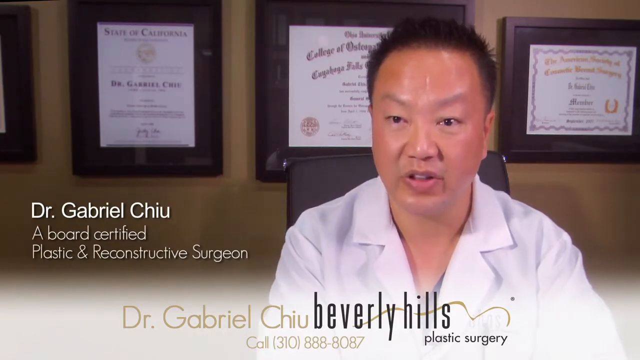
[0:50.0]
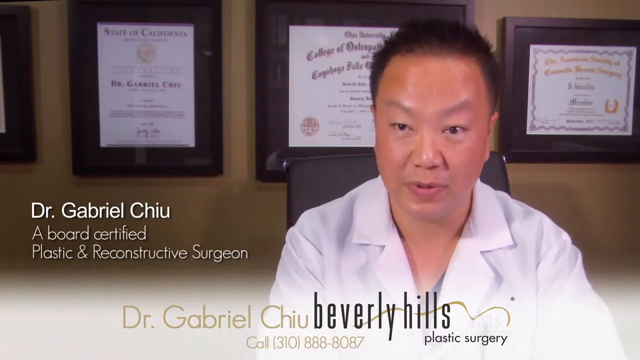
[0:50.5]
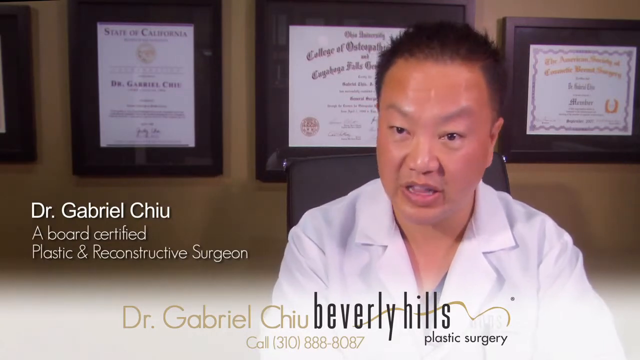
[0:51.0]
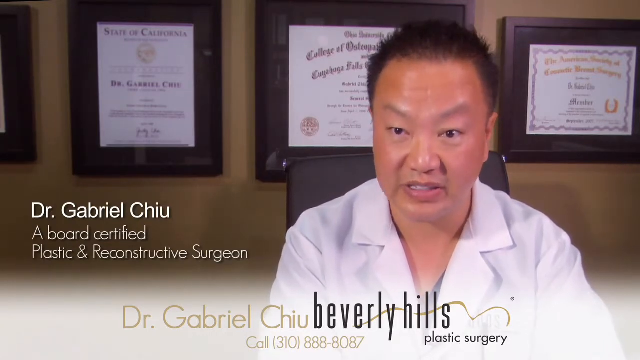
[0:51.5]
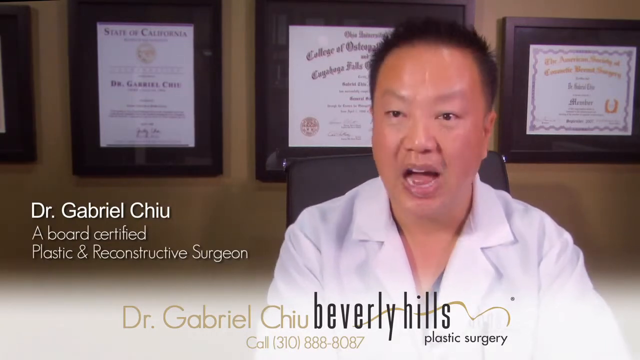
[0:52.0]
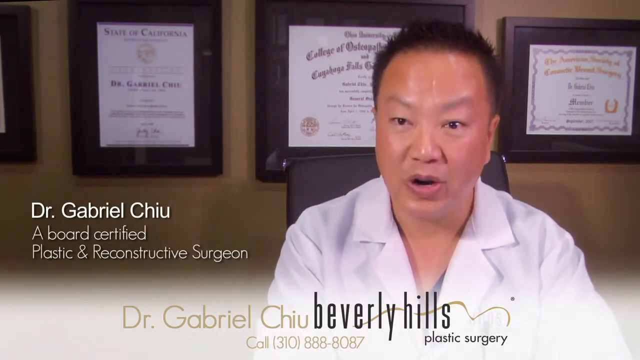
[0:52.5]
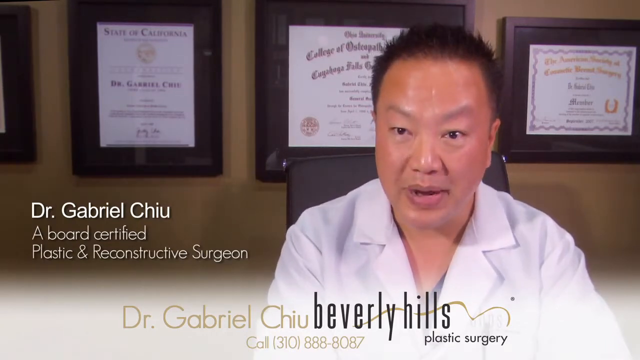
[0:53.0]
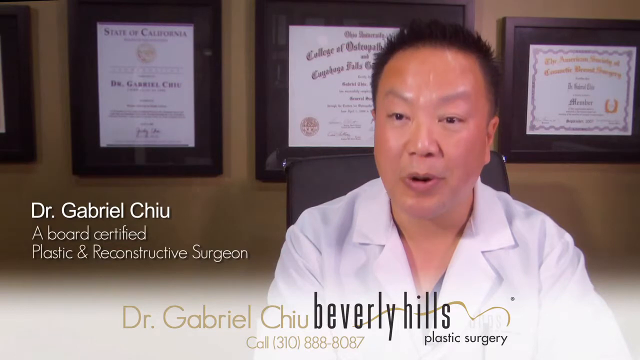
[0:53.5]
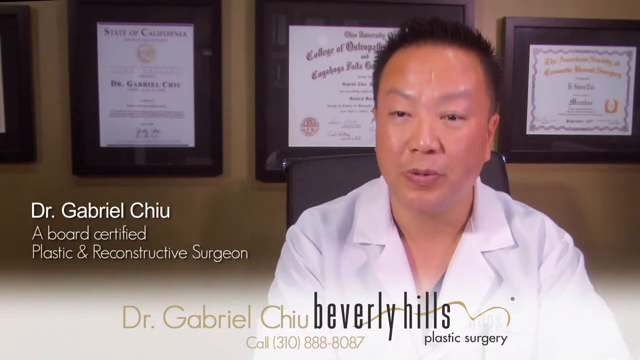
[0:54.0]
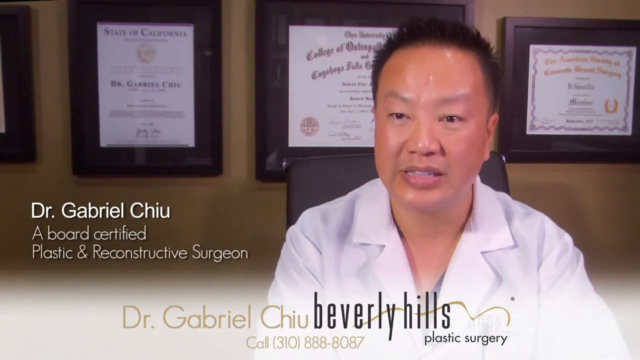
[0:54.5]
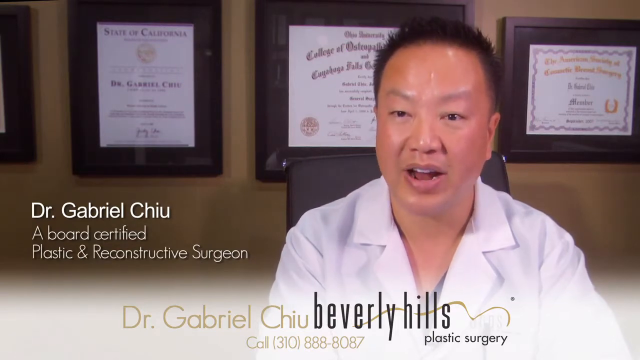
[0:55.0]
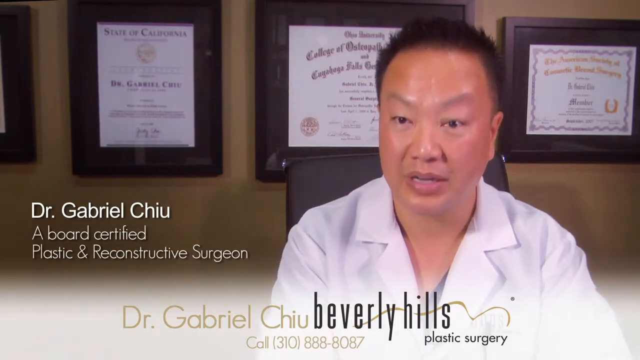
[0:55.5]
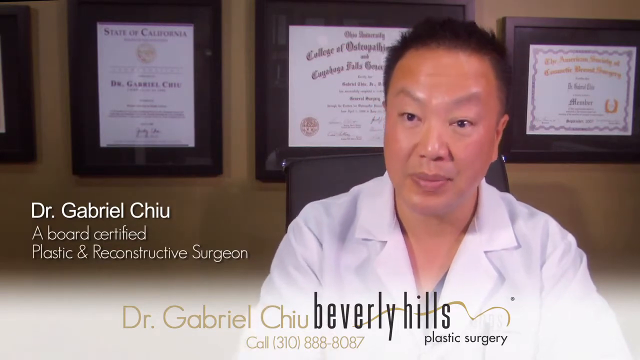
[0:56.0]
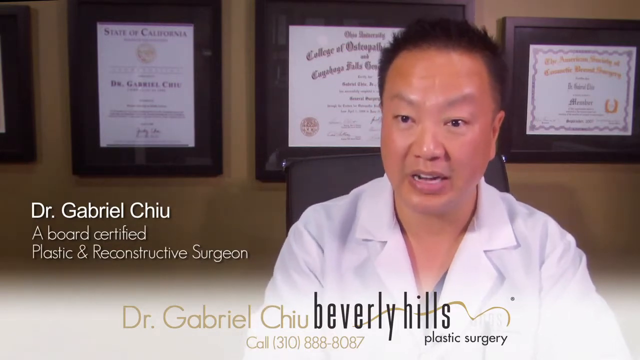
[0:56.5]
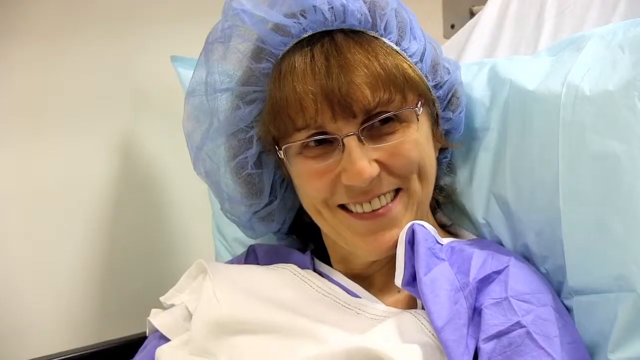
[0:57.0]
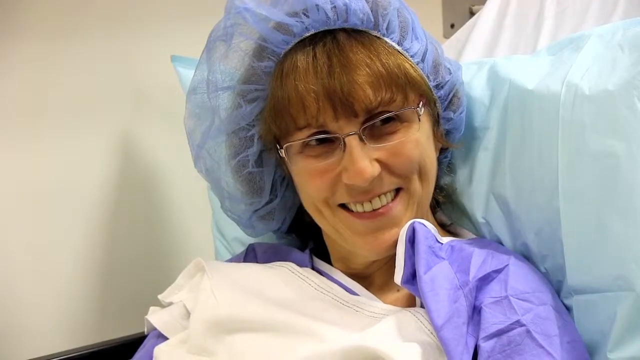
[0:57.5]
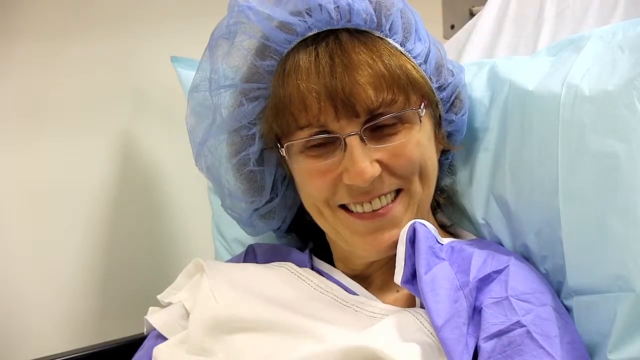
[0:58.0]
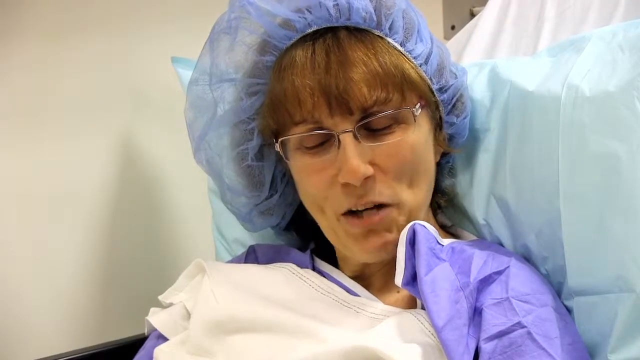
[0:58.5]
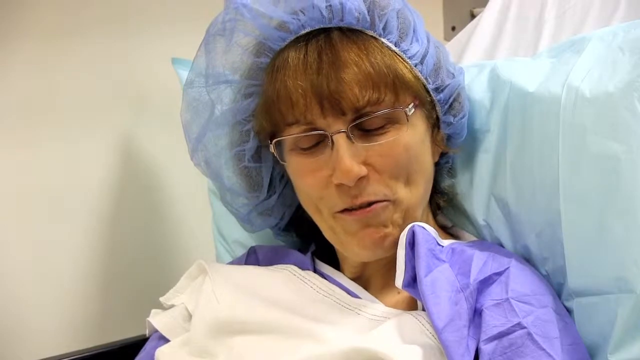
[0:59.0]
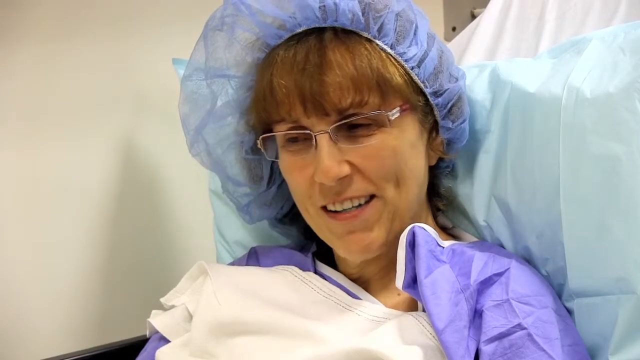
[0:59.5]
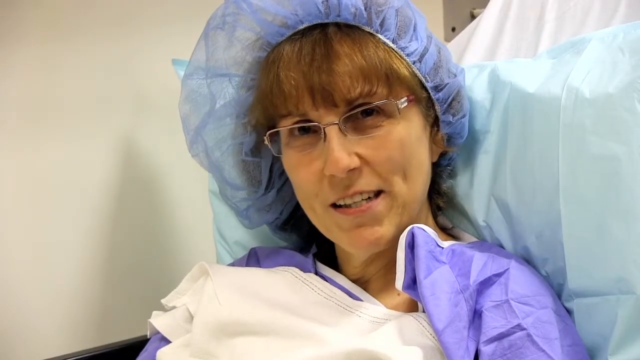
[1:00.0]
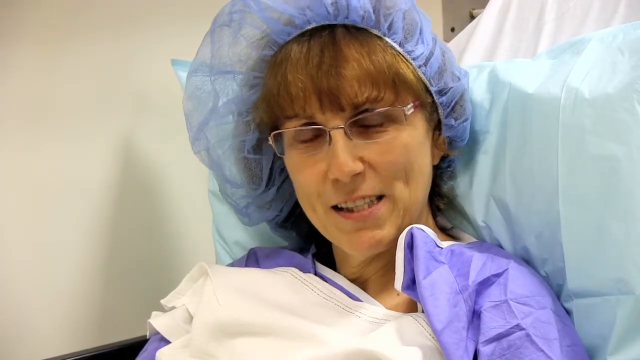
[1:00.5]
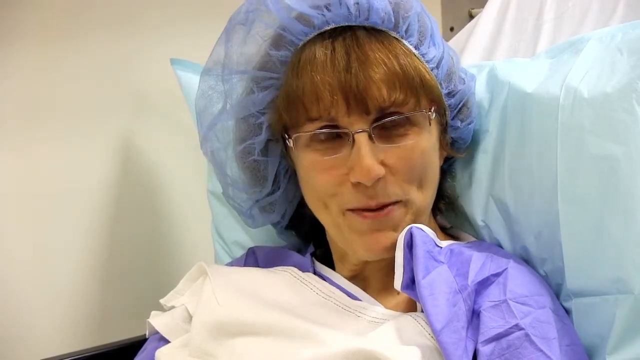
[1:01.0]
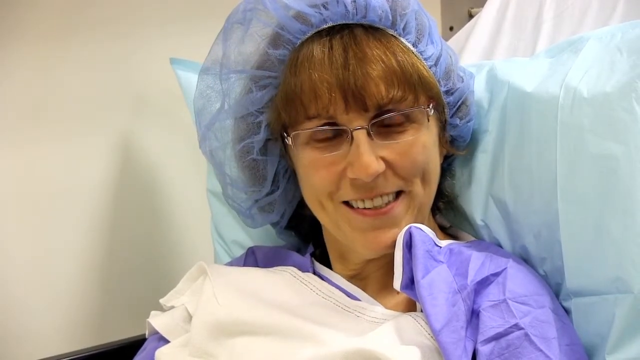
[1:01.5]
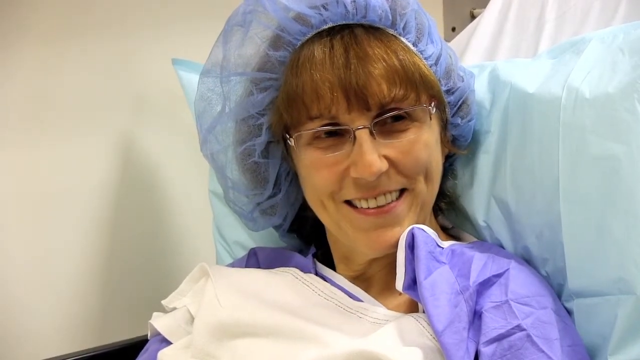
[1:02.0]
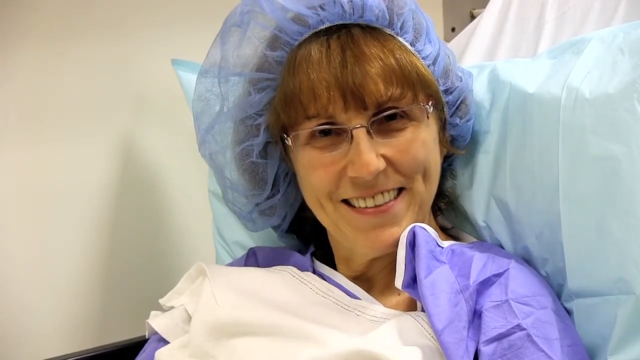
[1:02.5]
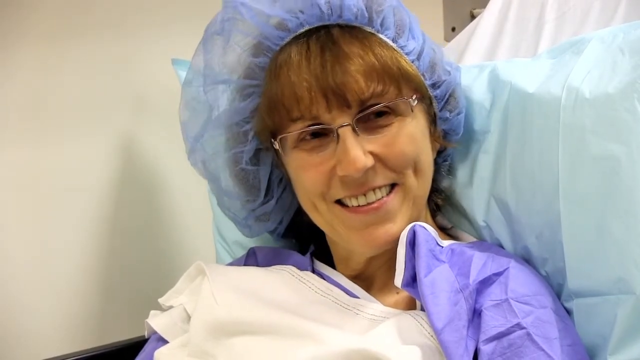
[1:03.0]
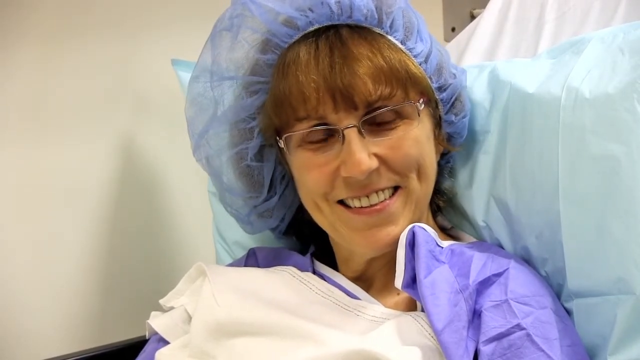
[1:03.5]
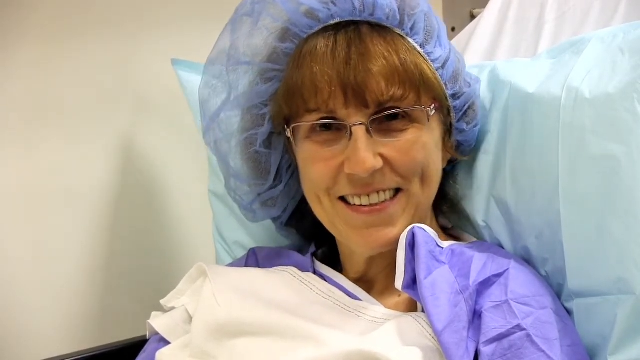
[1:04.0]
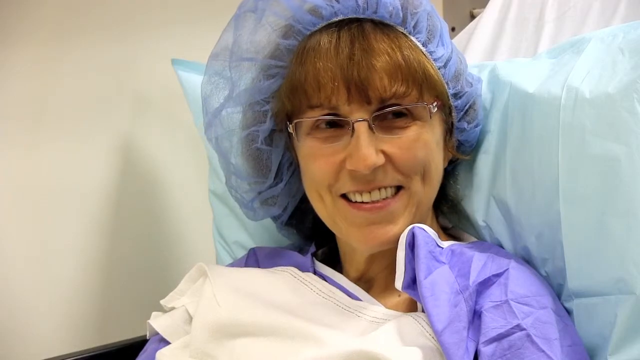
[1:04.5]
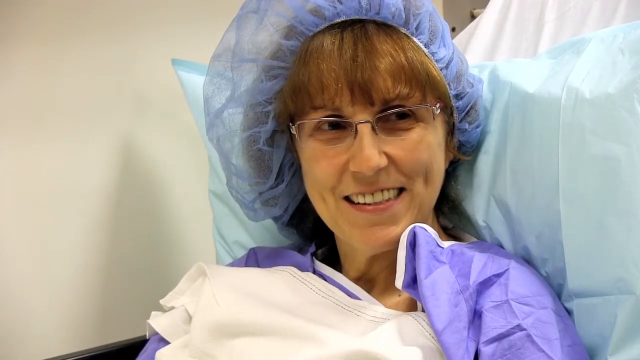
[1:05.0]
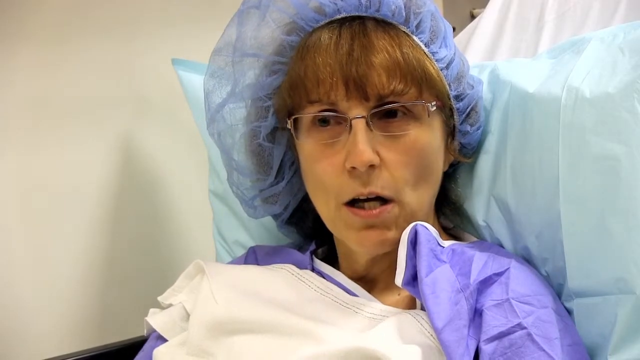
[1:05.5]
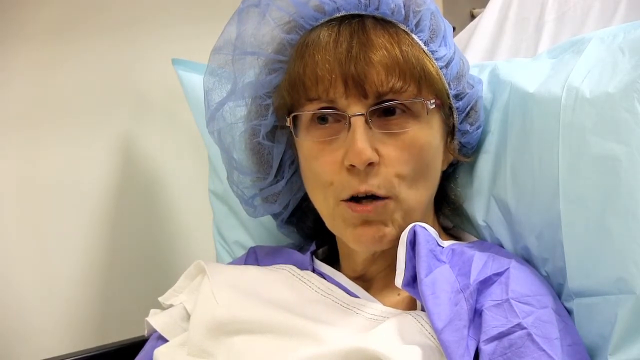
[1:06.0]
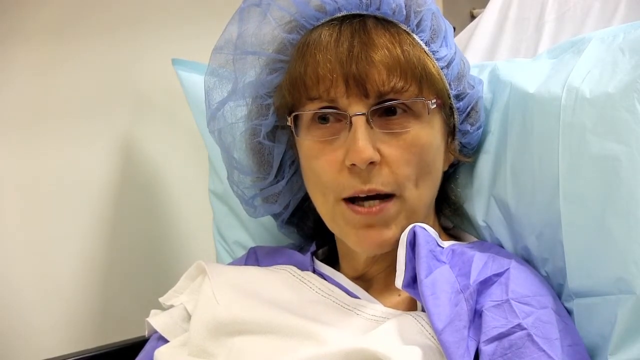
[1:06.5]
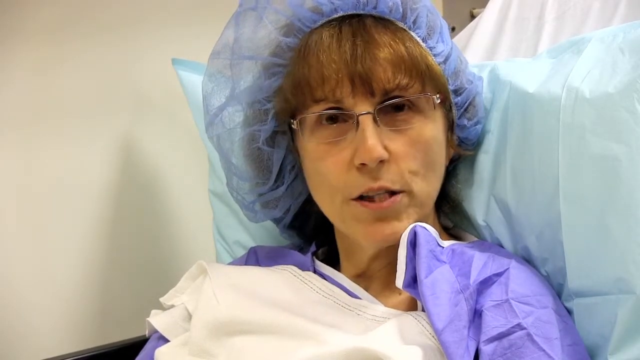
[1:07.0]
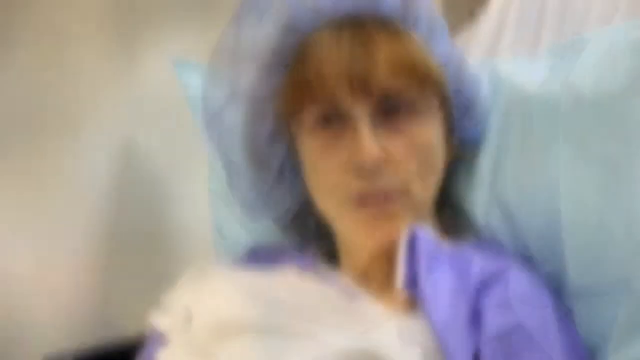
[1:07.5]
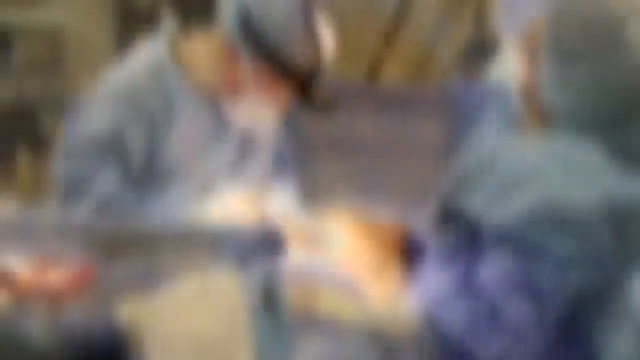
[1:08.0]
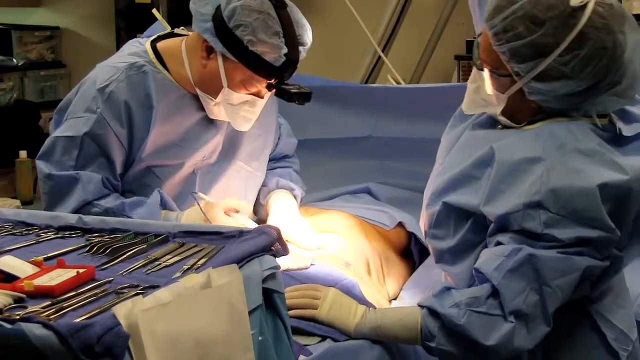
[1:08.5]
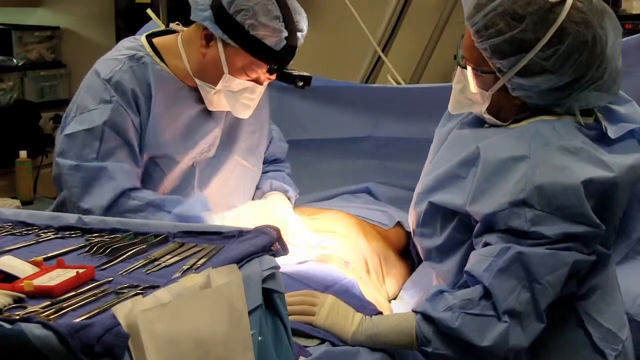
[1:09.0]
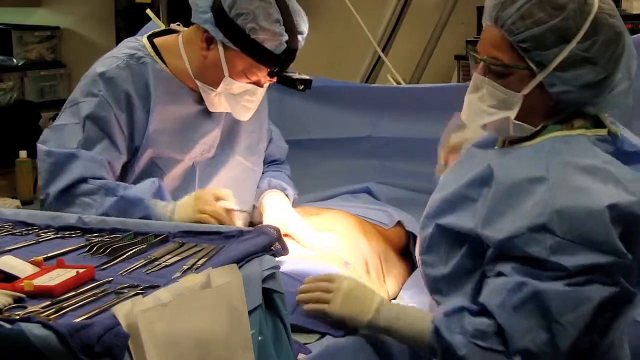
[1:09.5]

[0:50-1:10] The interview with Dr. Gabriel Chiu continues as he sits at his desk, with a subtitle reading "a board certified... plastic and reconstructive surgeon." On the wall behind him are framed certifications and qualifications. The video cuts to the same woman from the earlier interview, now in a hairnet and hospital gown, sitting in a hospital bed and being interviewed, seemingly just before going into surgery. She looks happy to be there. The video then cuts to a scene of open surgery.